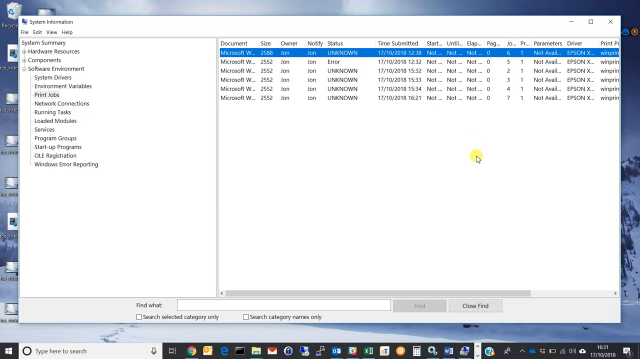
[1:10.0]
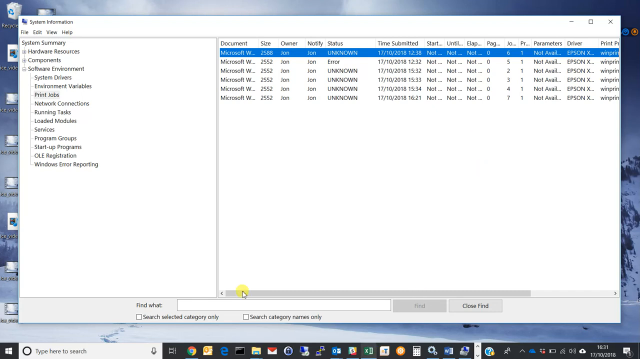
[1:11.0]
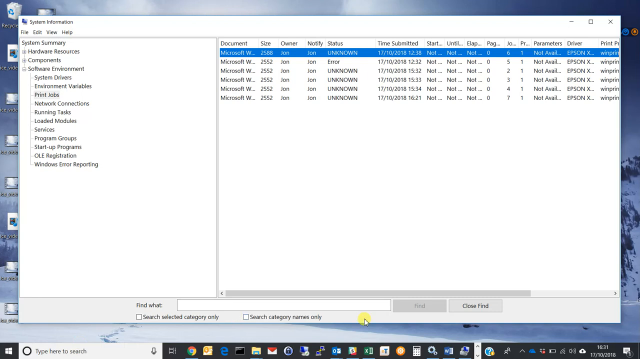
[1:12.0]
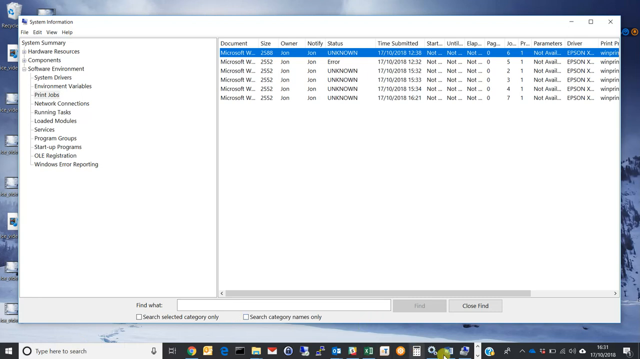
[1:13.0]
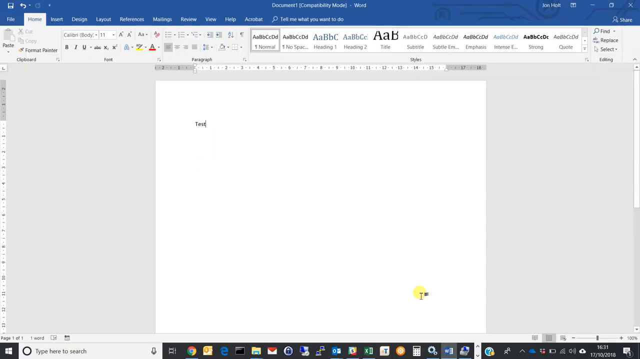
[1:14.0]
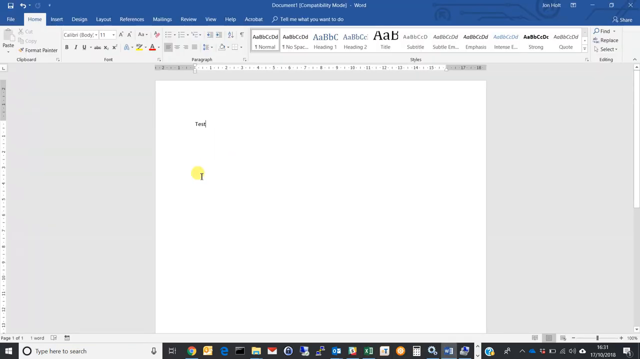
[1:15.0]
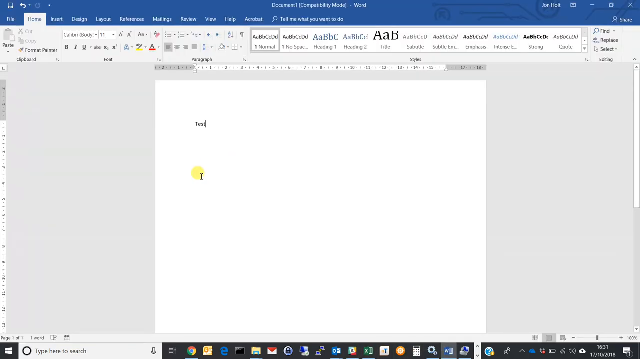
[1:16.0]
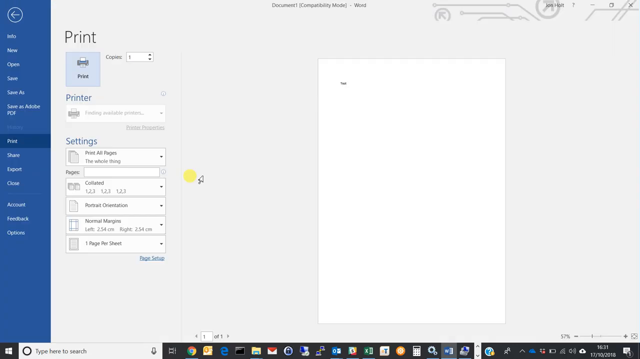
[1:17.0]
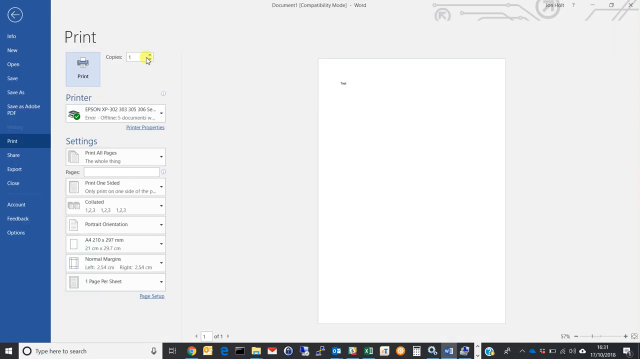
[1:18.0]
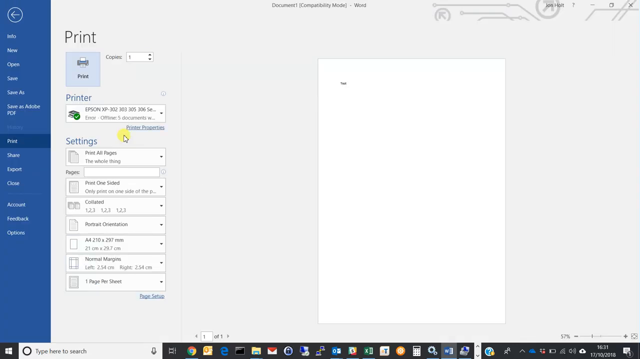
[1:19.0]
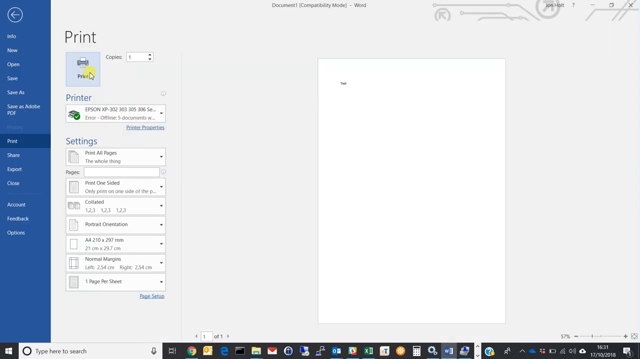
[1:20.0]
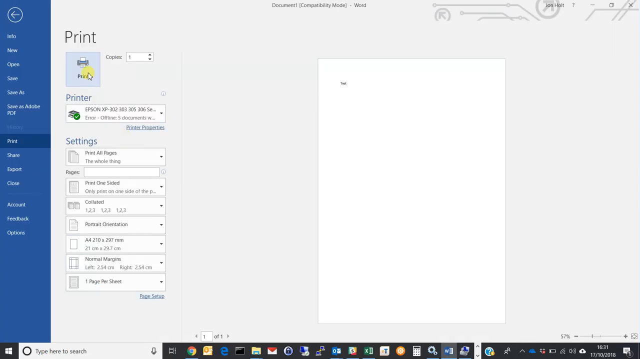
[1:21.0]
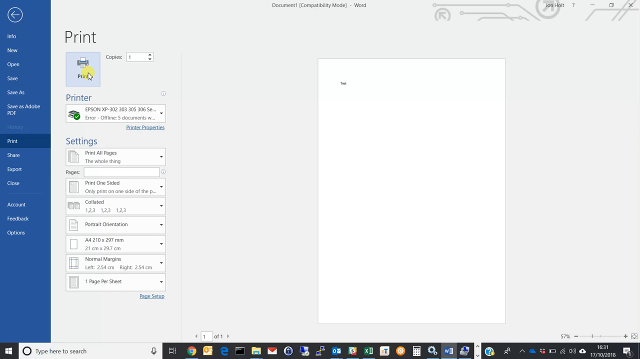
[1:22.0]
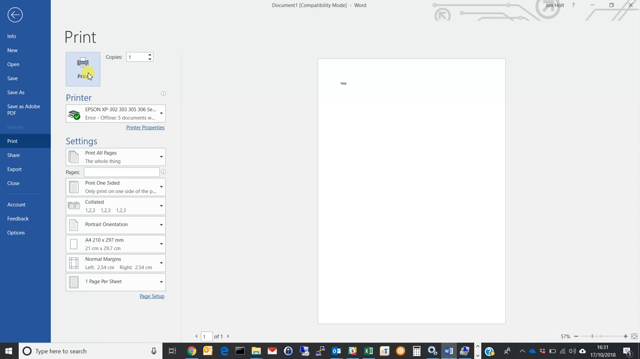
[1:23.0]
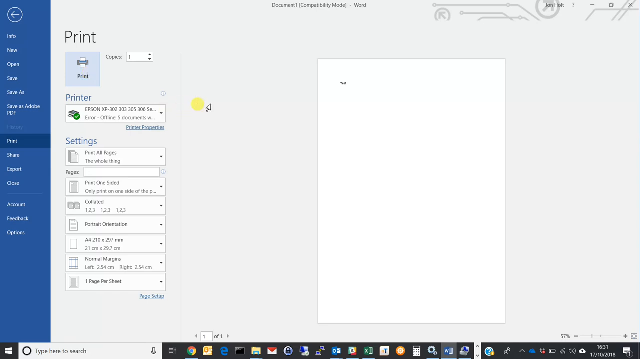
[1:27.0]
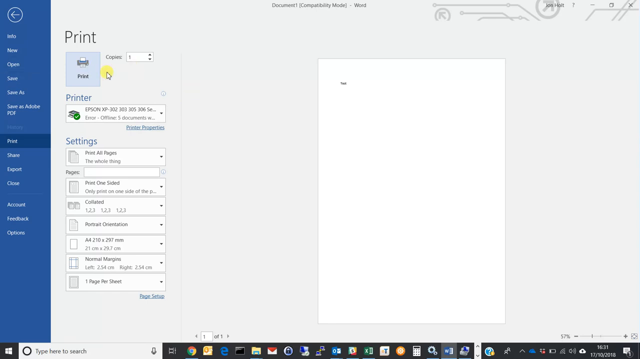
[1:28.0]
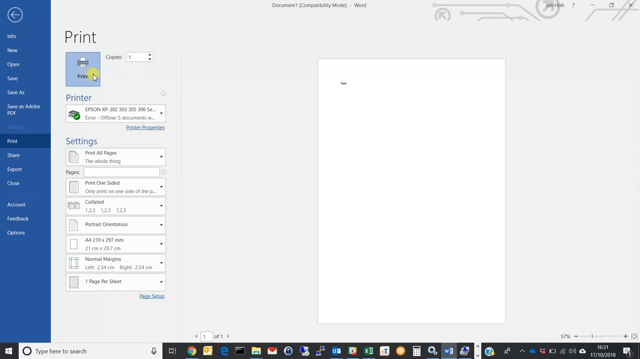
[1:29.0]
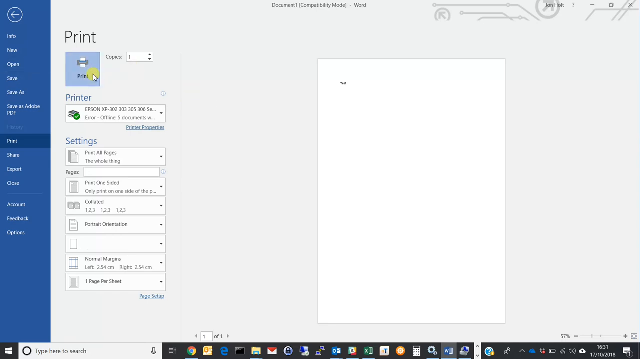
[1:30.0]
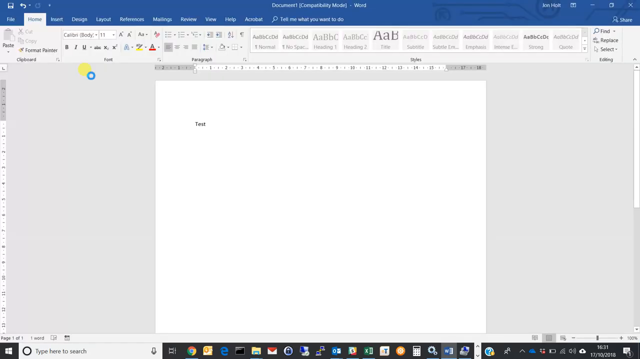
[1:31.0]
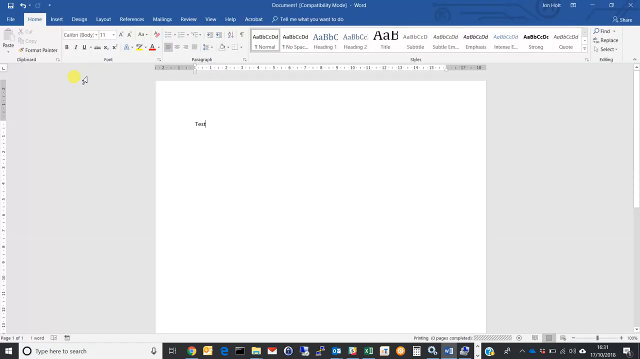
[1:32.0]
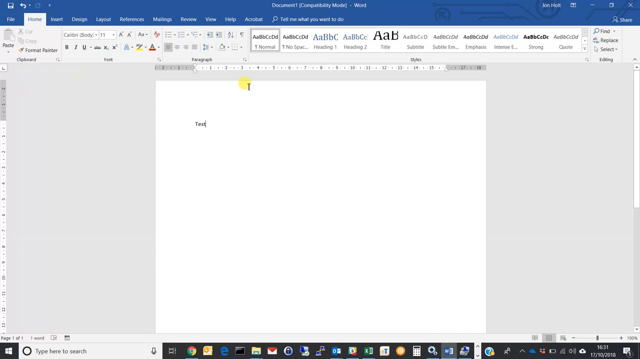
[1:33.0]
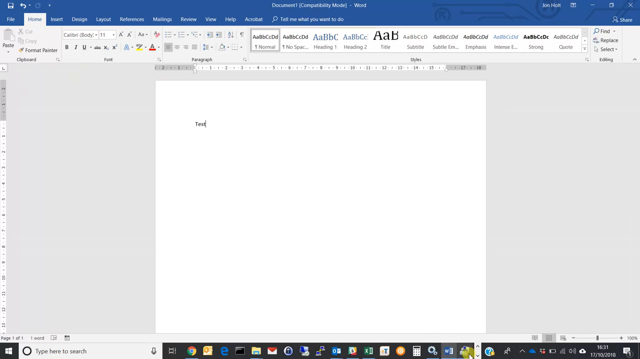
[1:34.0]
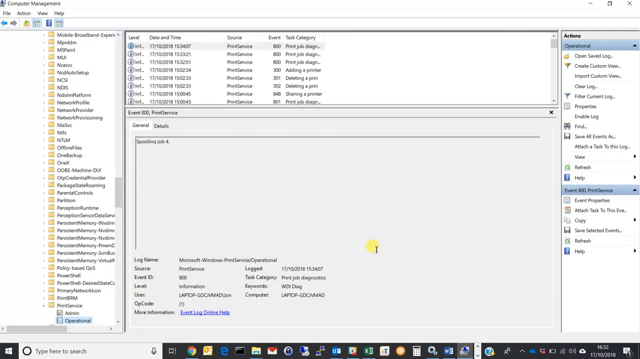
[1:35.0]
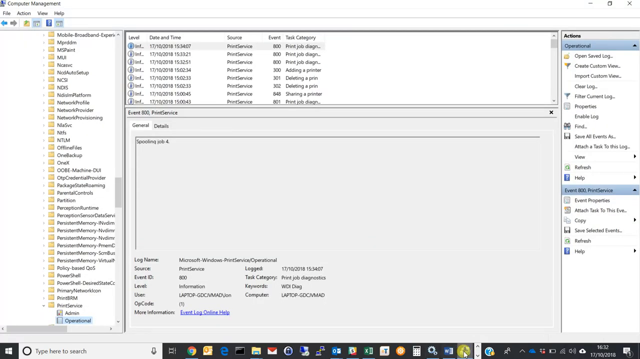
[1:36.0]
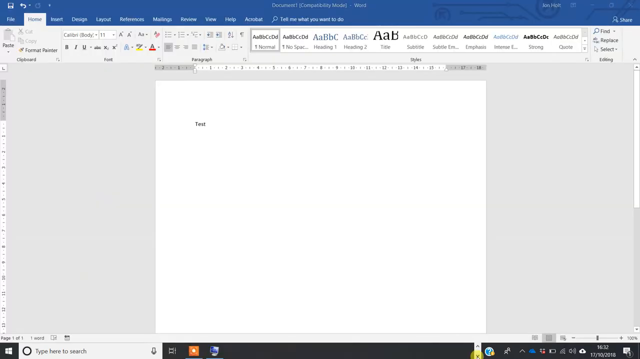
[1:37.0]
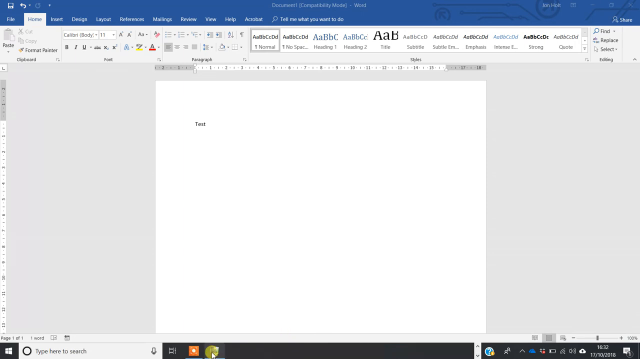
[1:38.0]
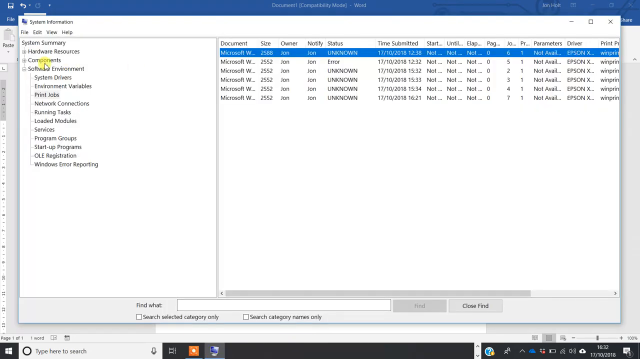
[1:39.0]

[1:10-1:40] The System Information panel stays open on the desktop, and the mouse cursor, surrounded by a highlighted yellow circle, has selected the print jobs section under software environment. The cursor browses over the print job history on the right, opening up various sections so they can be fully read. The user then opens a document in Microsoft Word that shows the word "test", and looks like they are attempting to print one of the past jobs. The user switches back and forth between the document and the System Information panel, perhaps opening the highlighted first entry and comparing it with what is shown in the Word document, seemingly looking for specific details about this document or another previously printed job.